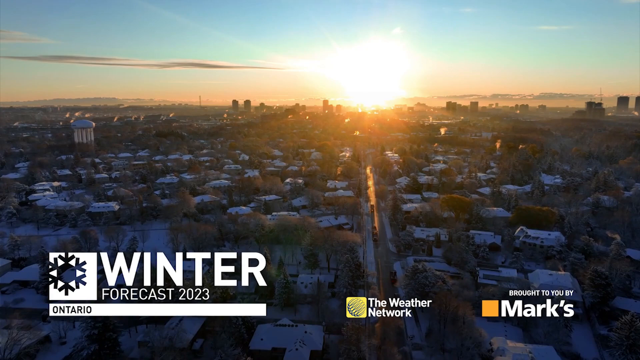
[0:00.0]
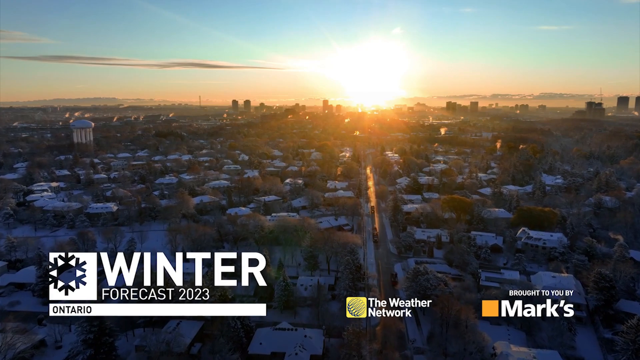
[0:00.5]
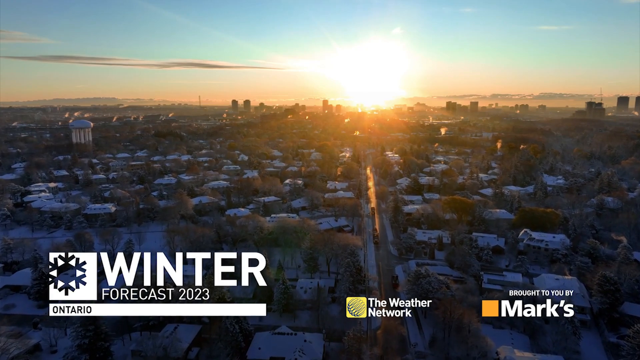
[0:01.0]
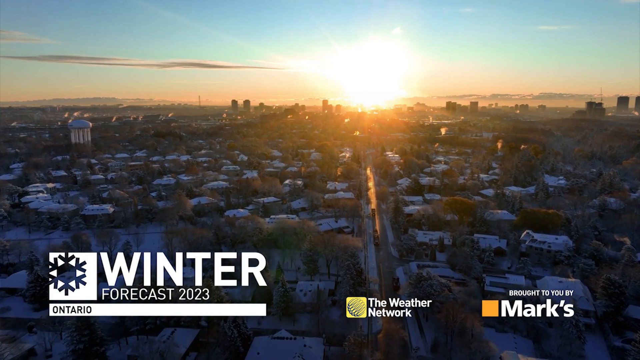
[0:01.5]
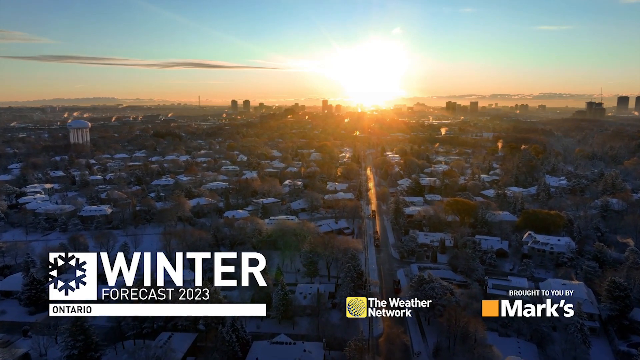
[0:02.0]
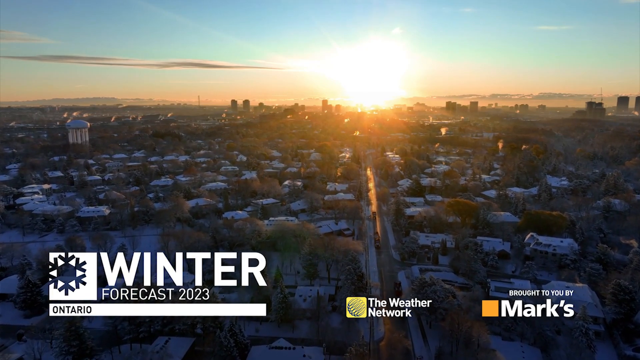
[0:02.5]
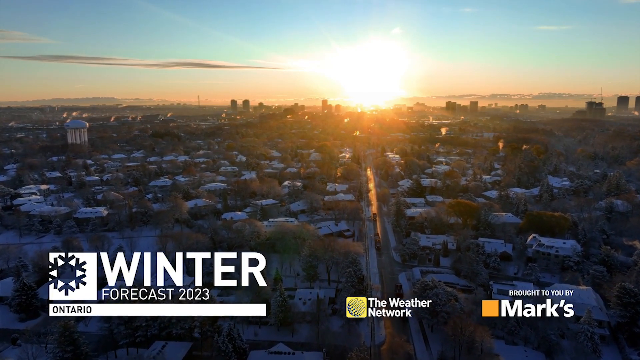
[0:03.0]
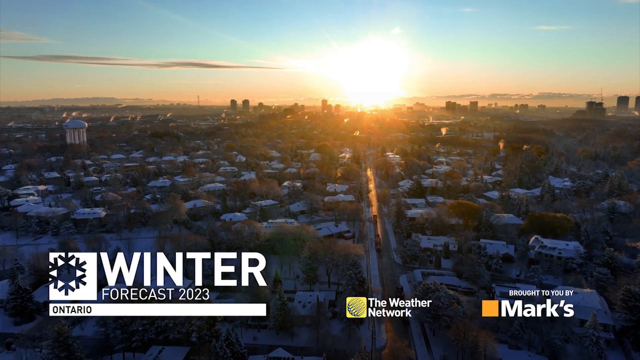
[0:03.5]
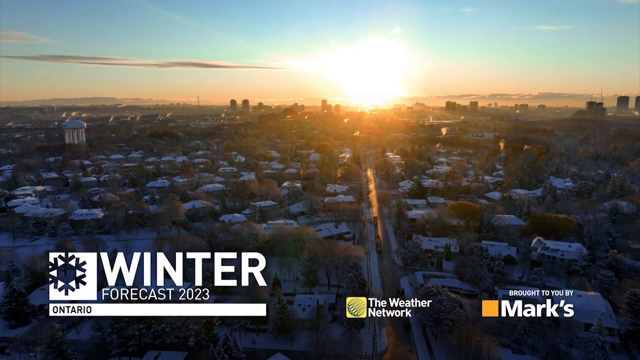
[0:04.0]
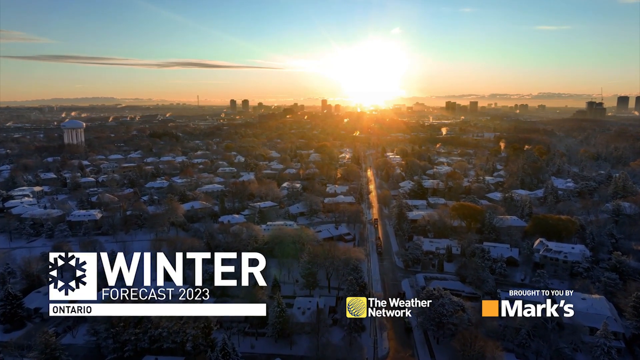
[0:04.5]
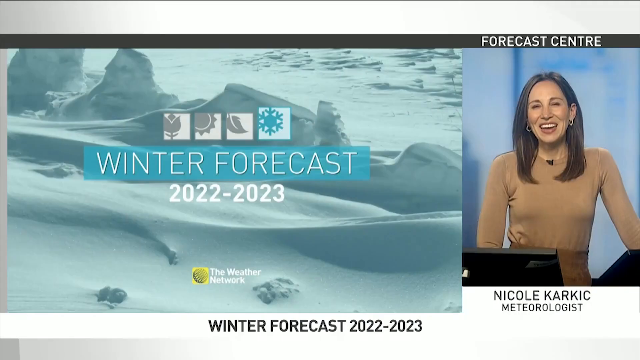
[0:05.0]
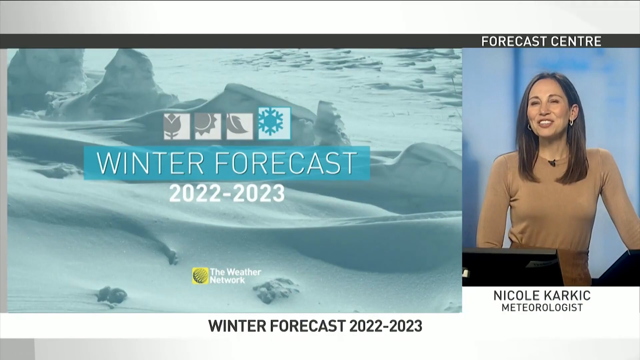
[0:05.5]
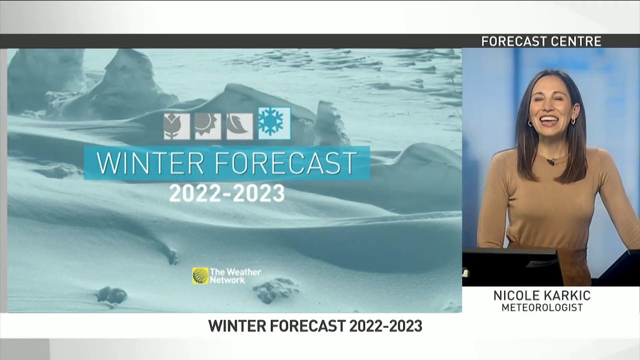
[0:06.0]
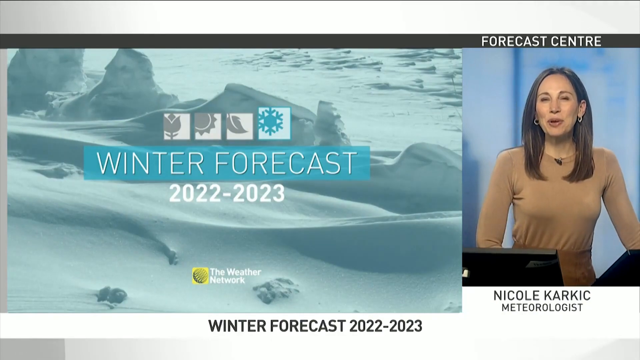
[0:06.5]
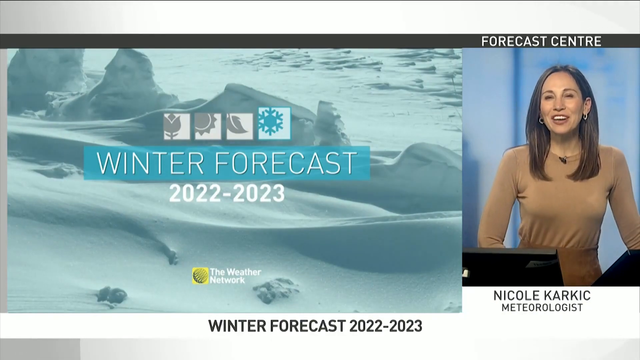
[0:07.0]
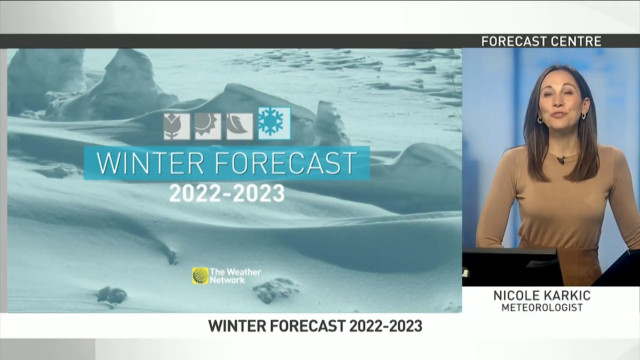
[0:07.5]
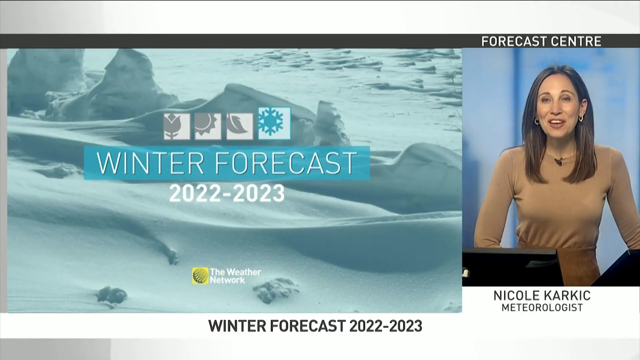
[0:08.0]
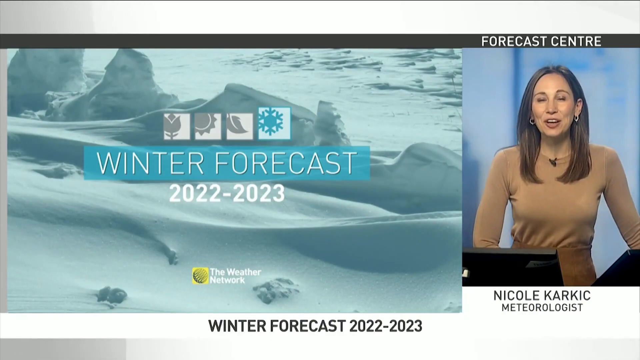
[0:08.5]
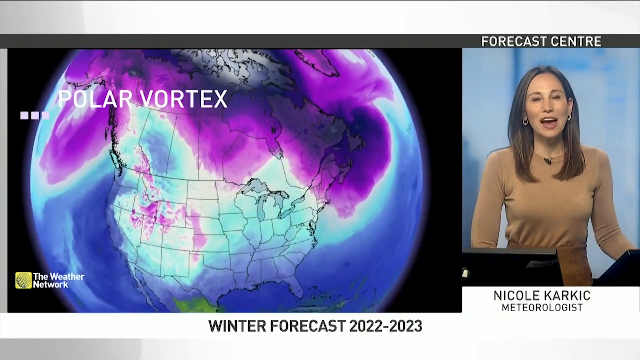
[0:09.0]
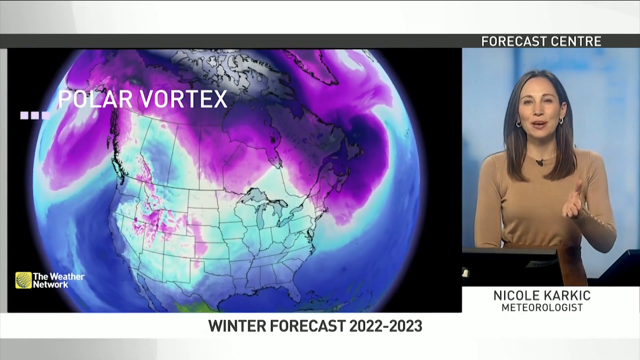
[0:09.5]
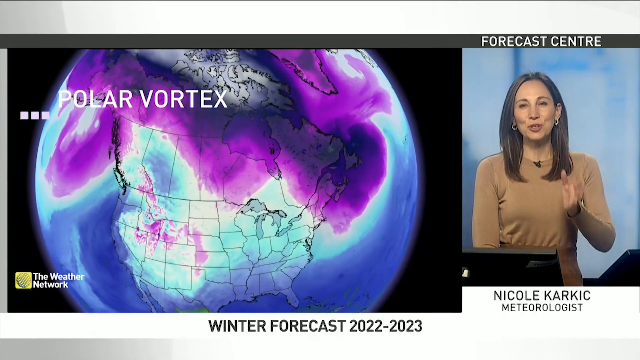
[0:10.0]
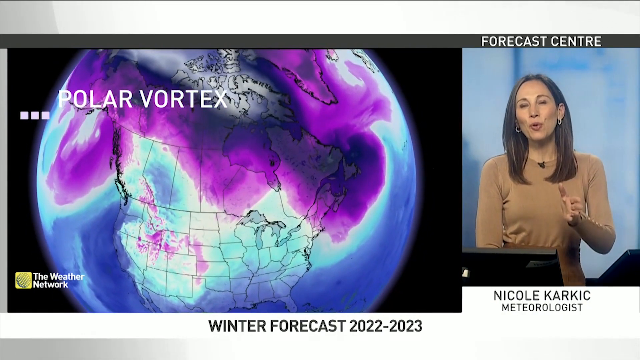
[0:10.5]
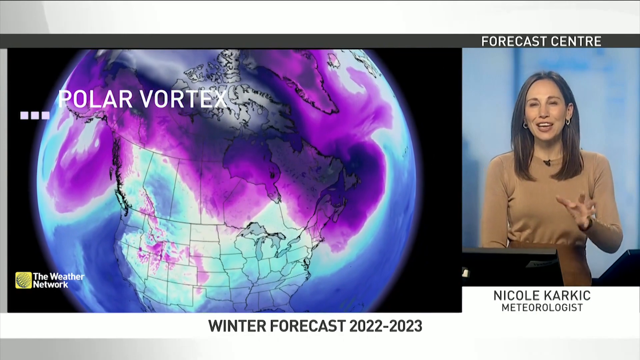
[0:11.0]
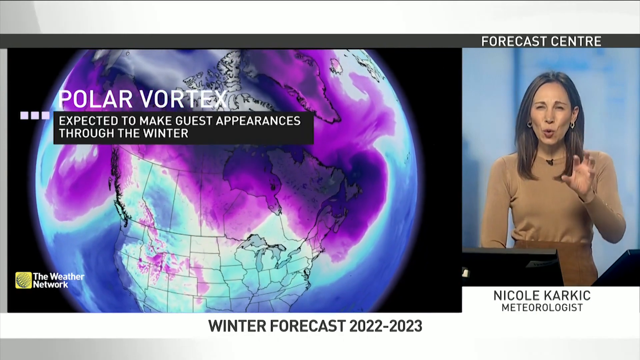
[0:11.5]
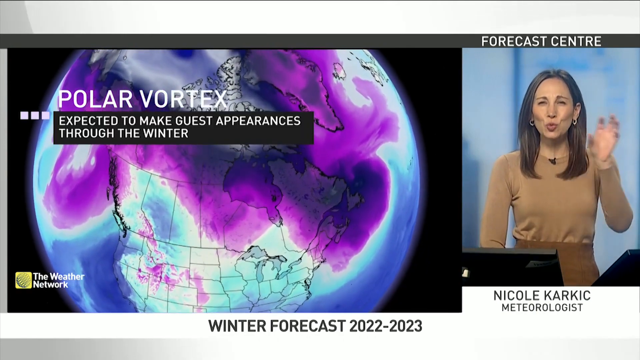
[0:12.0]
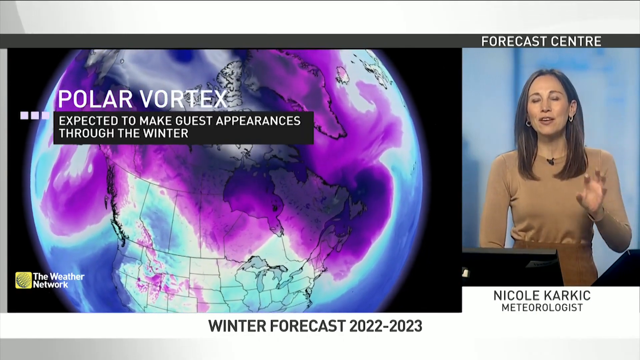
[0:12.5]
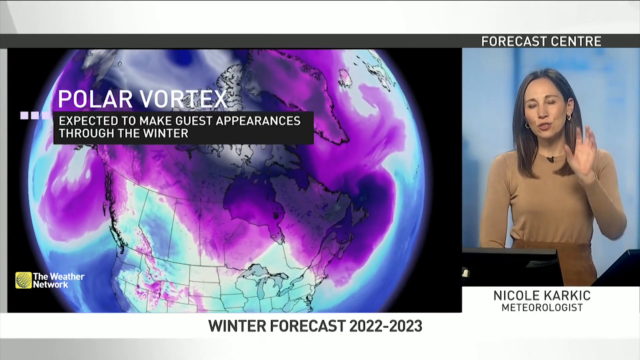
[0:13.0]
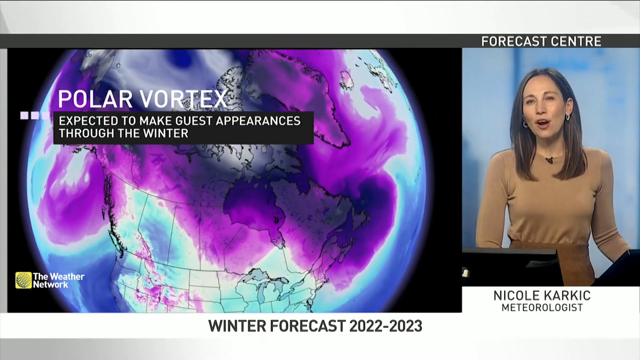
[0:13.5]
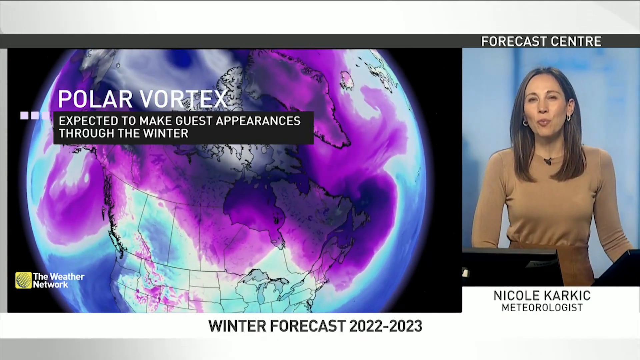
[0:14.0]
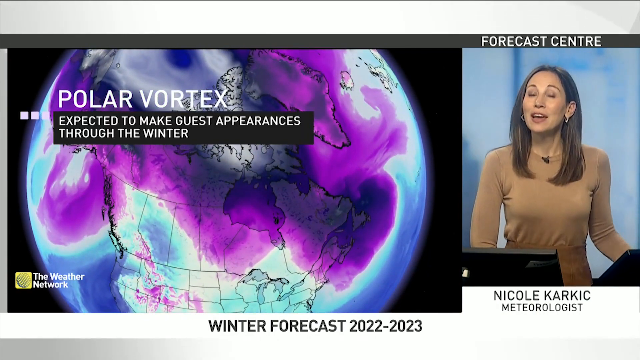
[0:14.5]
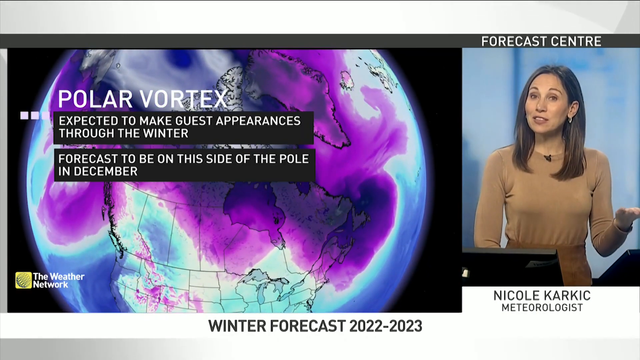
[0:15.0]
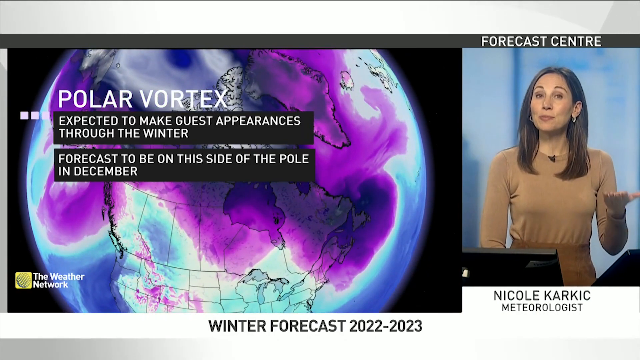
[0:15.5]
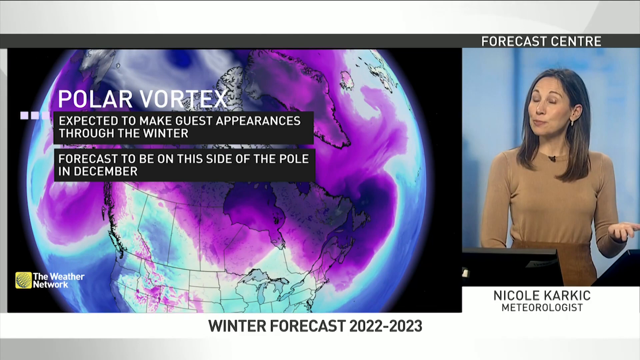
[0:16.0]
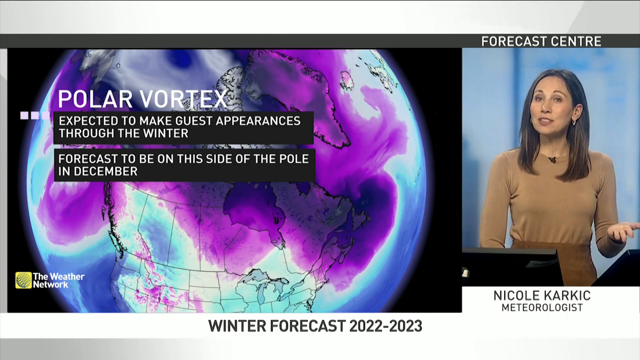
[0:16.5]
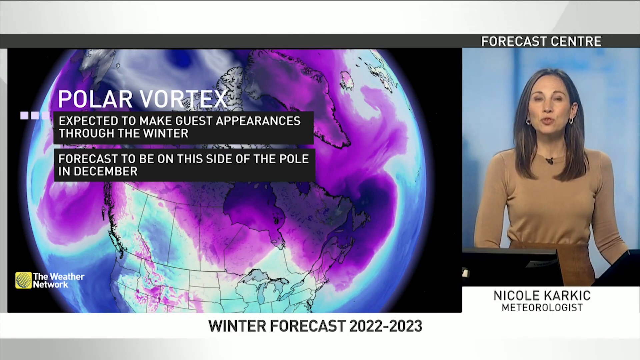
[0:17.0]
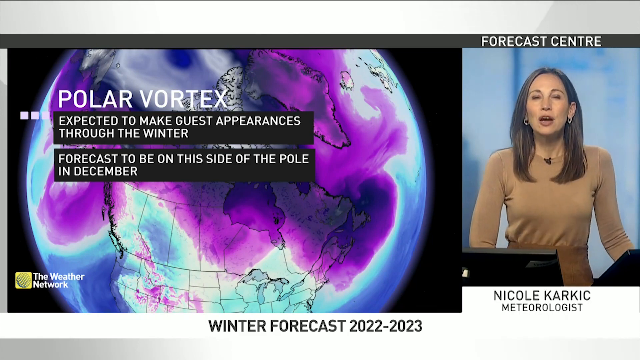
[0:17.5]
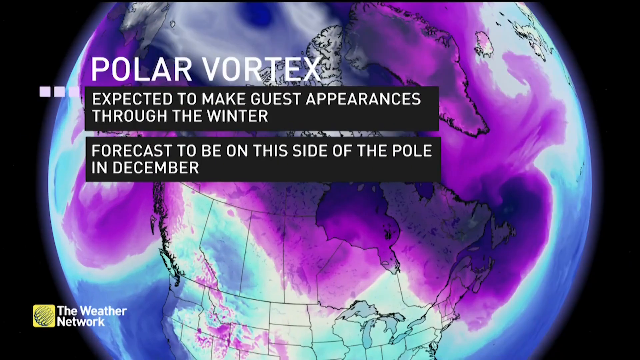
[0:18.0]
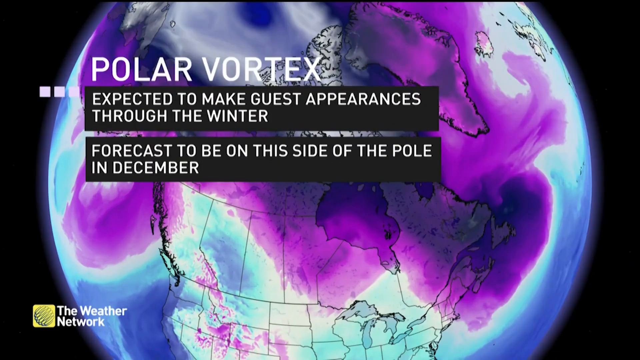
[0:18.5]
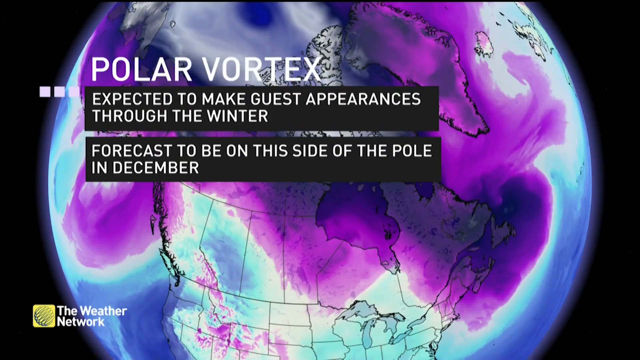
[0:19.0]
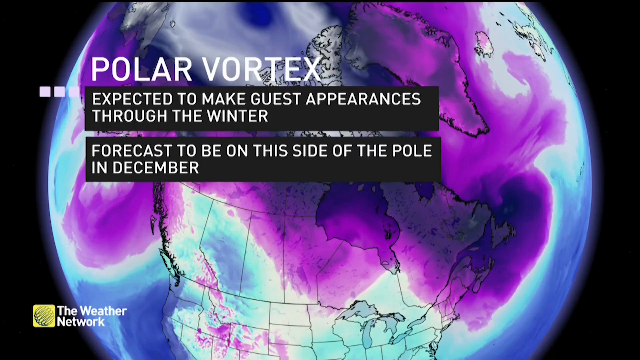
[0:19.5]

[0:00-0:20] The setting is not a city but seems to be a village. On-screen text reads "winter forecast 2023 the weather network brought to you by". The video is about the winter weather forecast for 2023. A woman is standing and describing the weather.